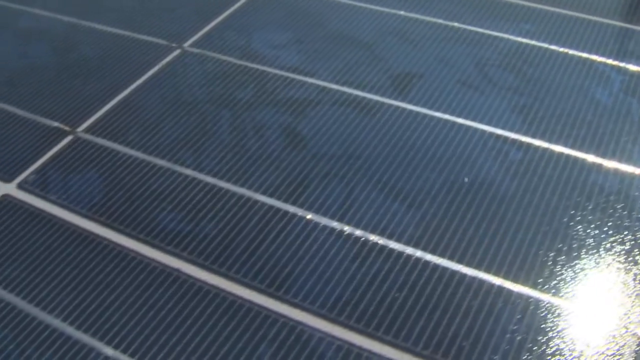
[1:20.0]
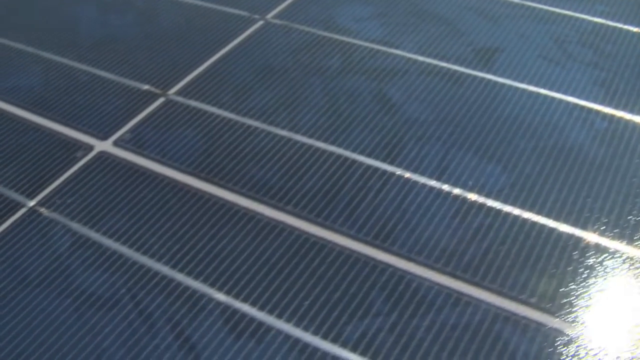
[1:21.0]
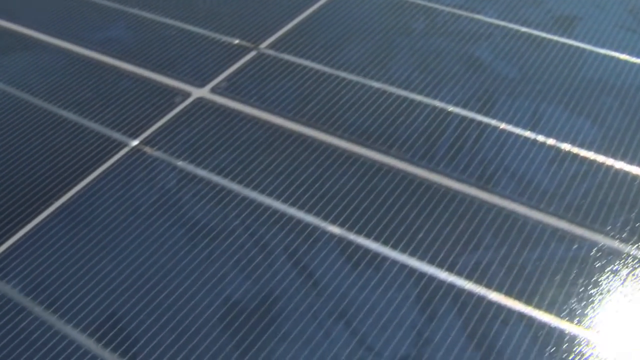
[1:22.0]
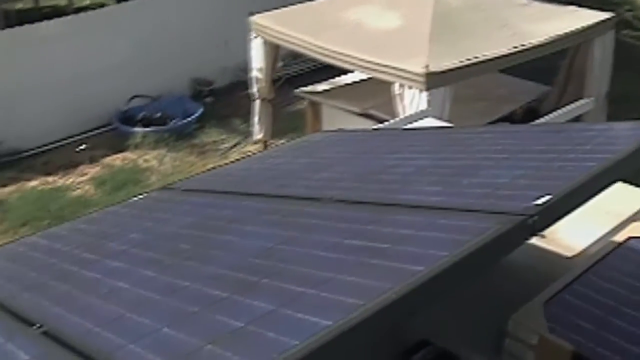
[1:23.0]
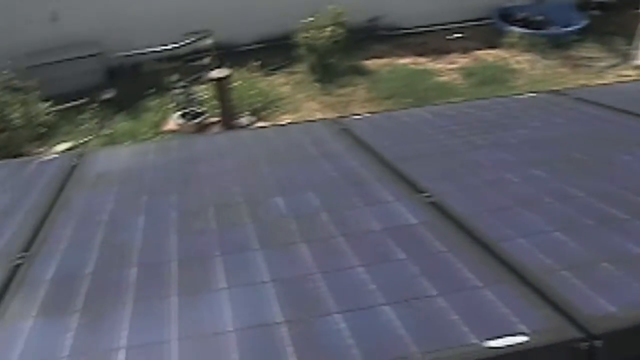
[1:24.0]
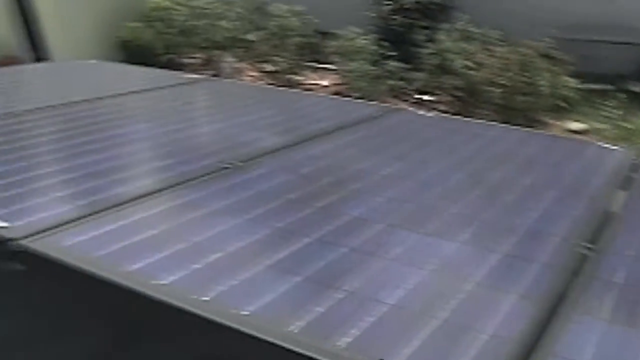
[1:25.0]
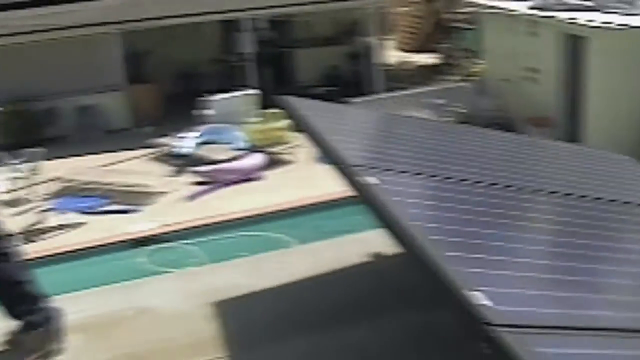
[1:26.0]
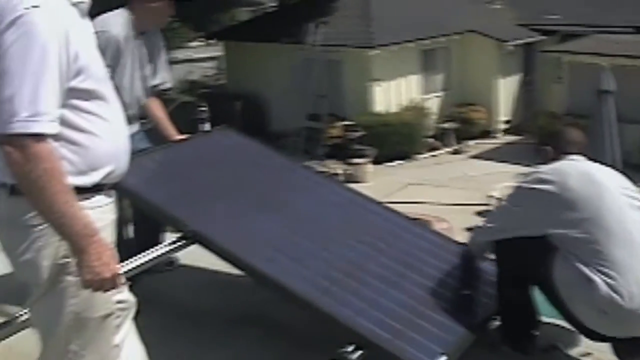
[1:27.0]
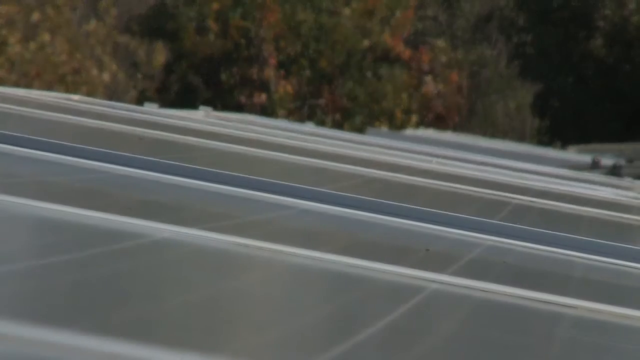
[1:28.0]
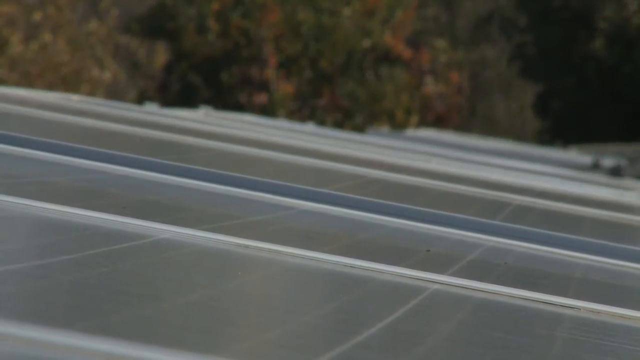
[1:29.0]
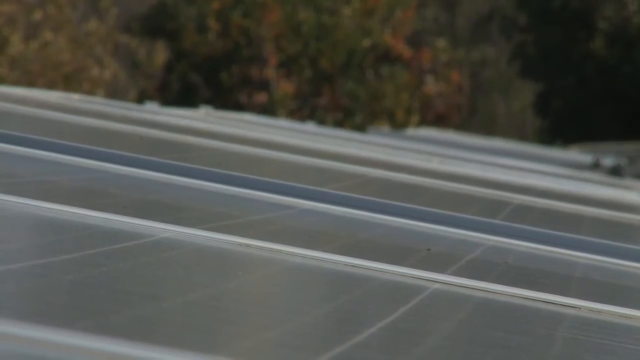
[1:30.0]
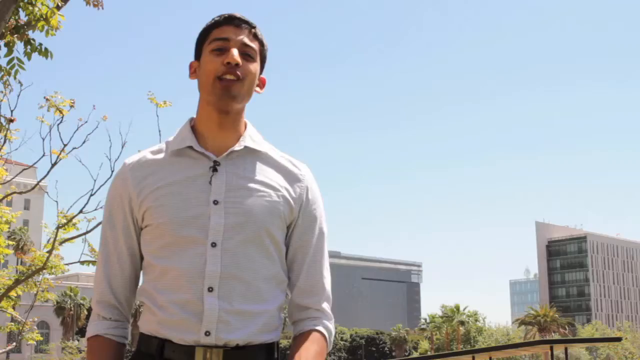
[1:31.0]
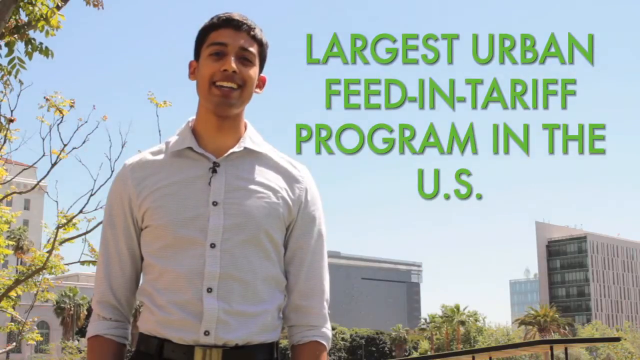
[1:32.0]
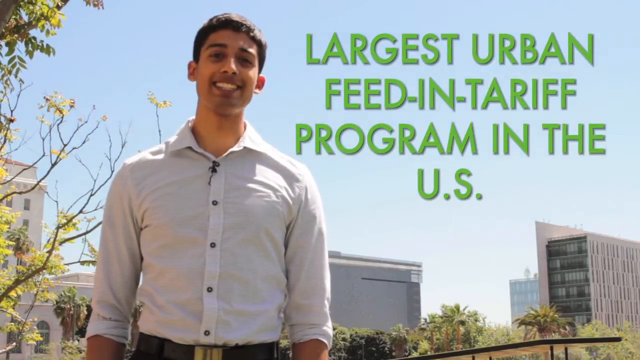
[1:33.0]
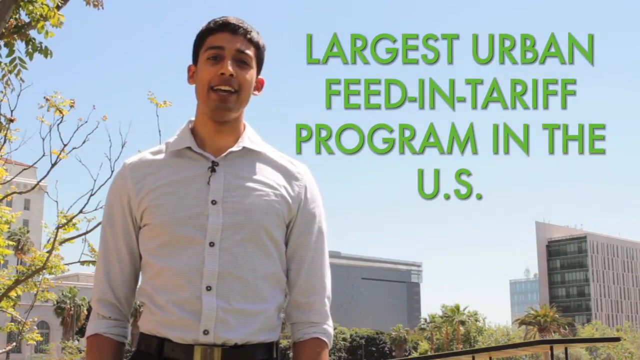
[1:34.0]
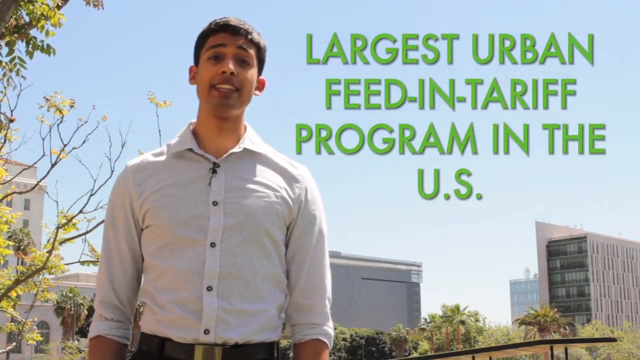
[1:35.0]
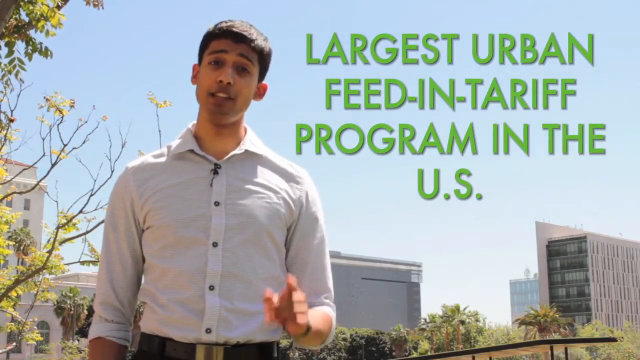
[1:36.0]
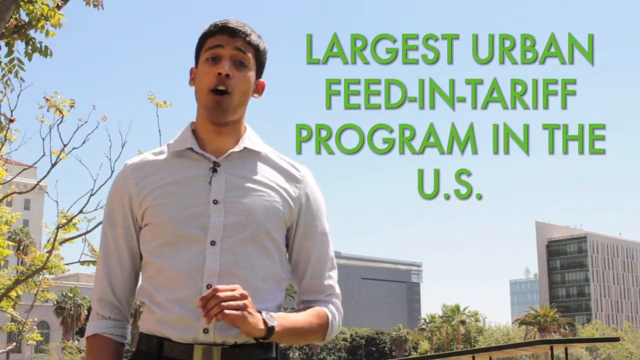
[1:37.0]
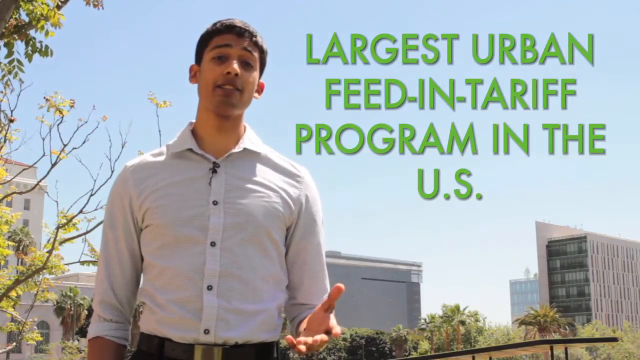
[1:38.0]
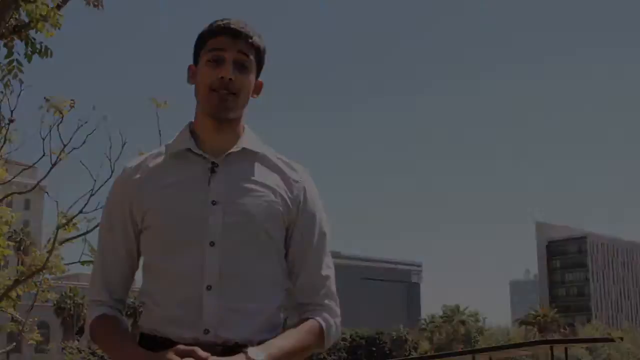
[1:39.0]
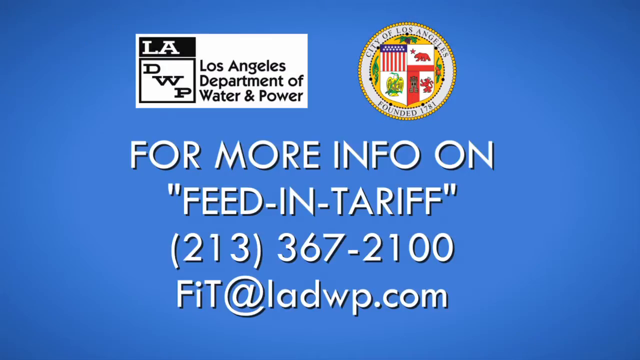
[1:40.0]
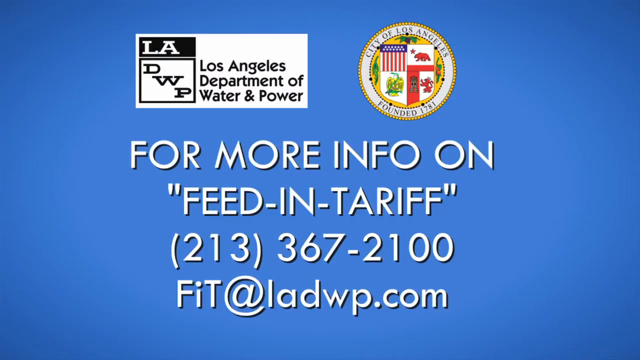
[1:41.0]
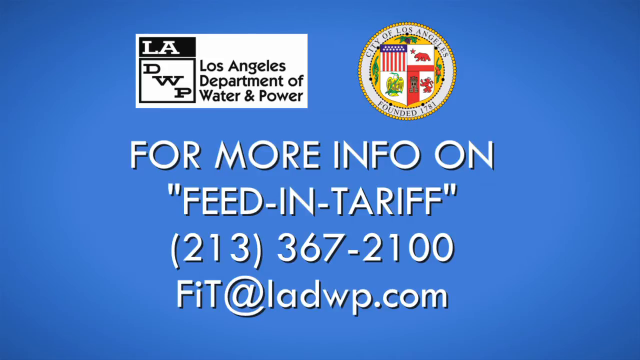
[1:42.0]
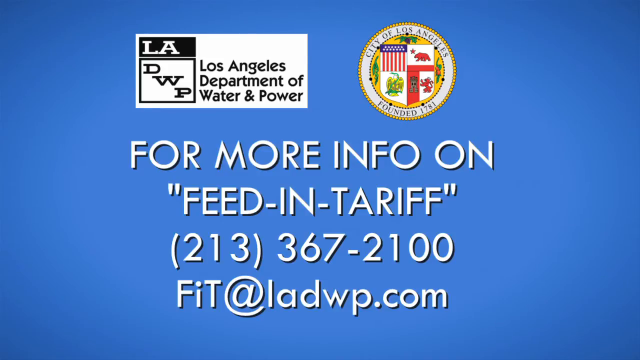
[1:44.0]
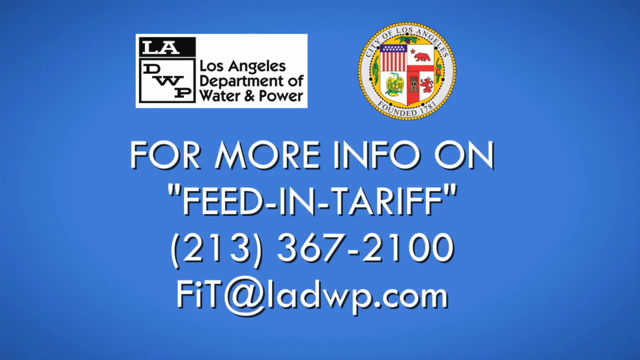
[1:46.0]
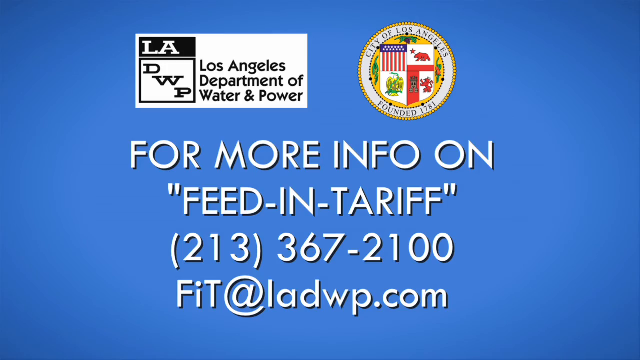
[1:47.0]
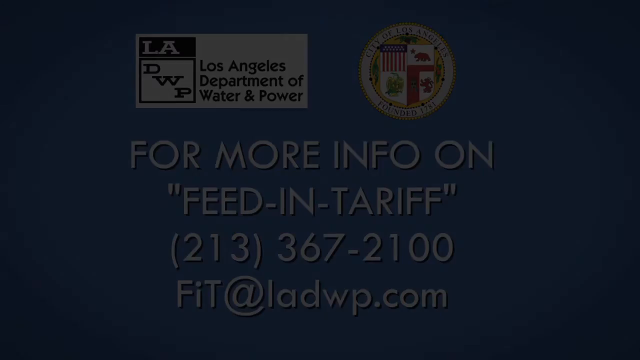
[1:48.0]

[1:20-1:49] A very close-up view of a dark blue solar panel slides down to the left, showing its details, including gray vertical and horizontal lines. The scene switches to another view, maybe video this time, looking down on solar panels from a roof toward a garden, maybe a small residential garden, with a pergola and a table under it. The view moves toward the left, showing six solar panels; behind them is a small pool in the garden, and behind that are two different houses. Three men seem to be installing more solar panels. Next is a view of a roof with newly installed solar panels on top. The video then switches back to the man talking, with a skyline background, a white and bluish sky in sunny weather, and trees and branches on the left. At the top of the screen, while he speaks, green text reads "largest urban feed-in tariff program in the US".